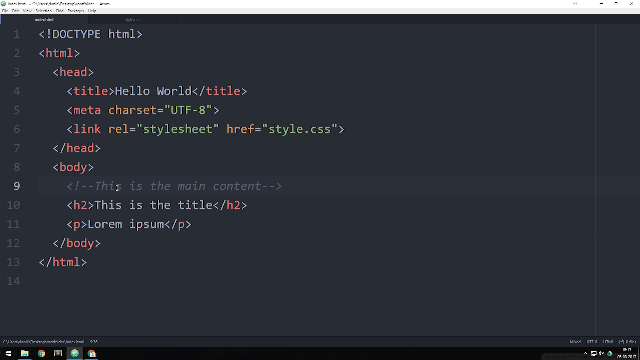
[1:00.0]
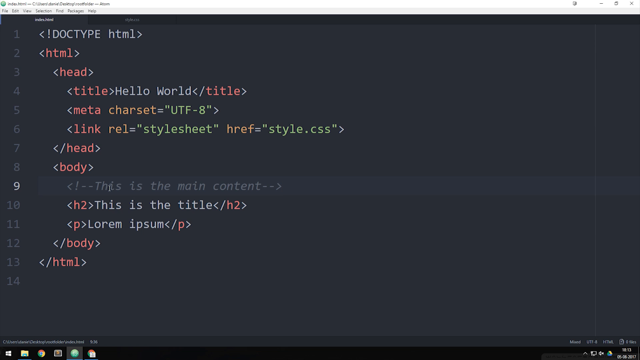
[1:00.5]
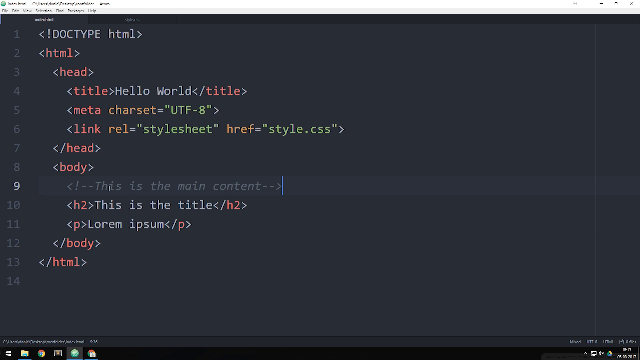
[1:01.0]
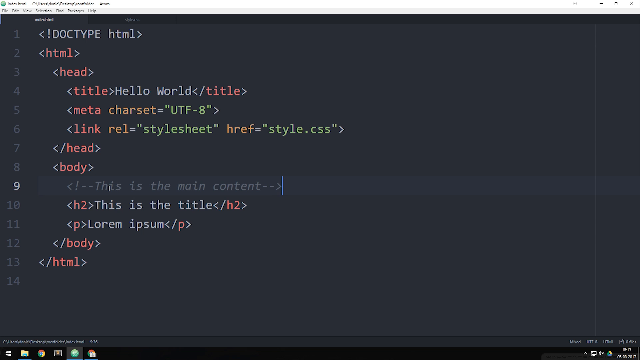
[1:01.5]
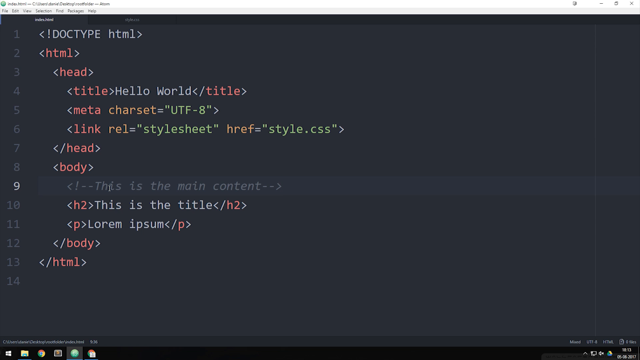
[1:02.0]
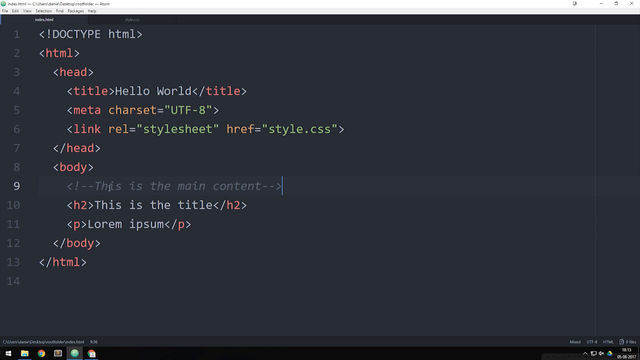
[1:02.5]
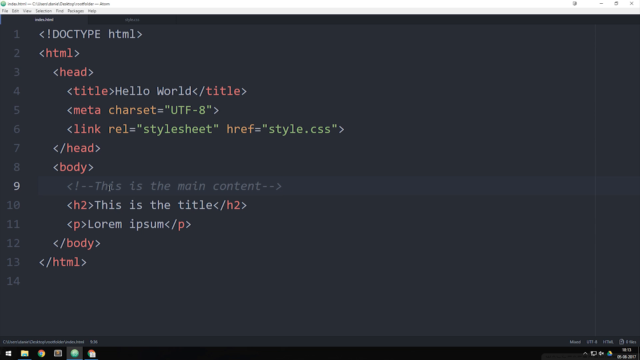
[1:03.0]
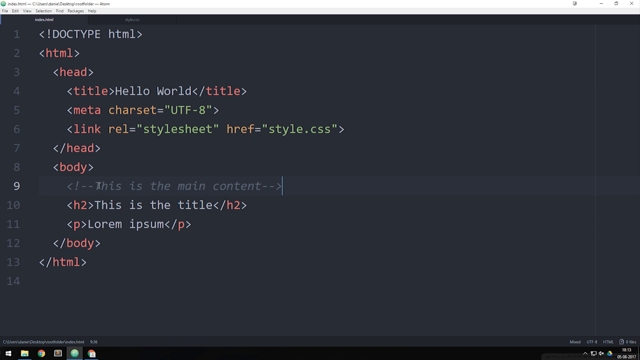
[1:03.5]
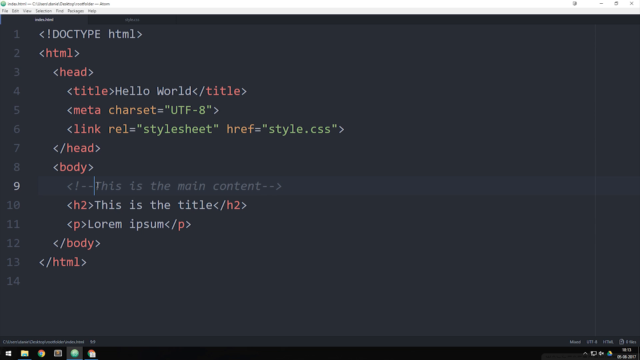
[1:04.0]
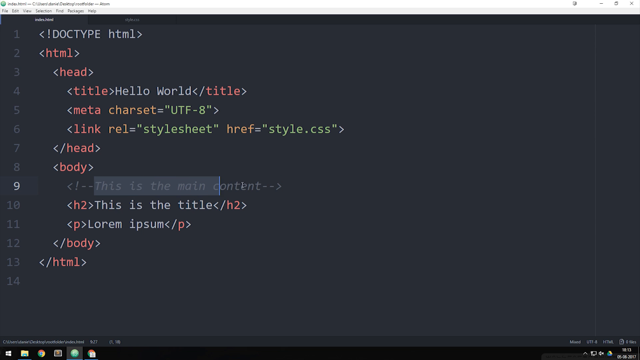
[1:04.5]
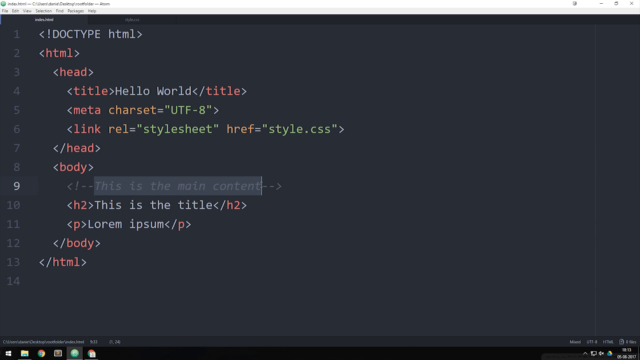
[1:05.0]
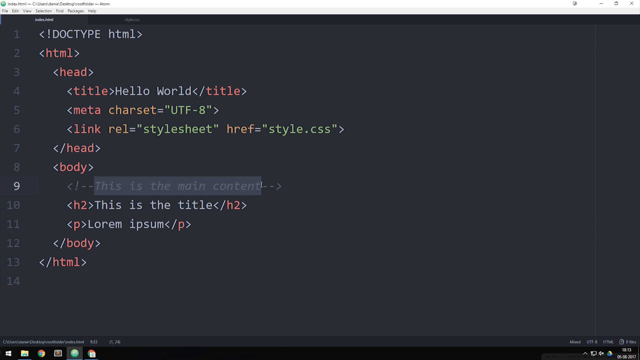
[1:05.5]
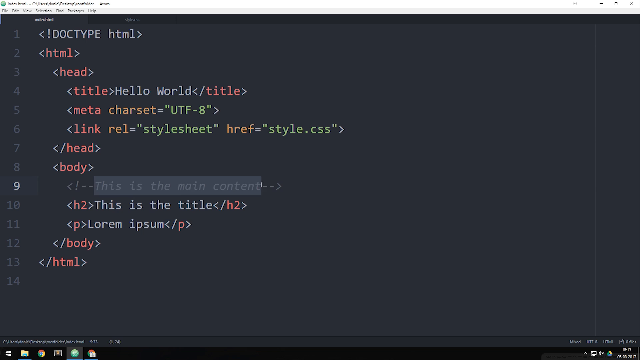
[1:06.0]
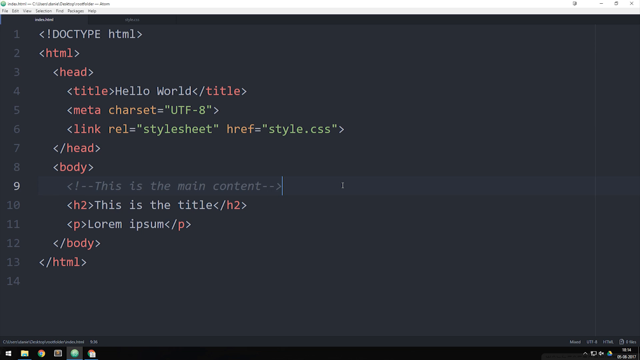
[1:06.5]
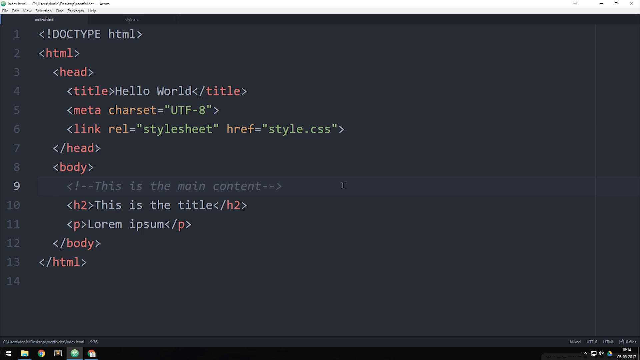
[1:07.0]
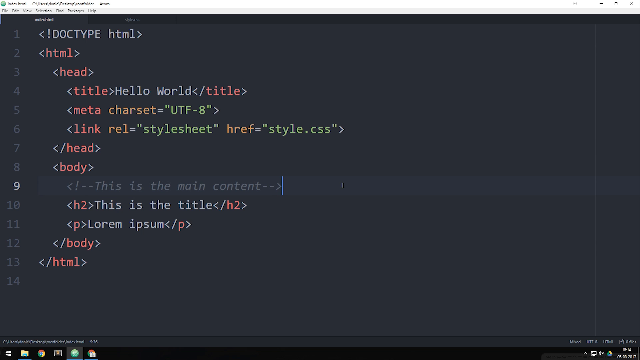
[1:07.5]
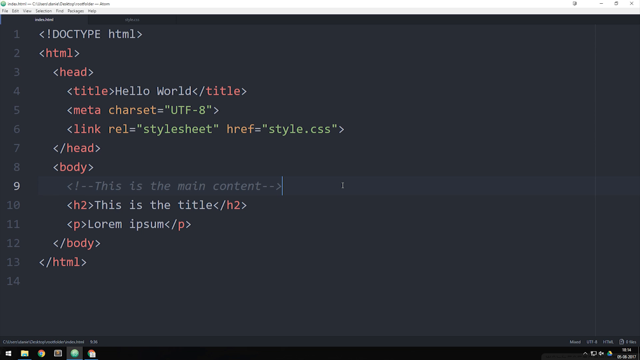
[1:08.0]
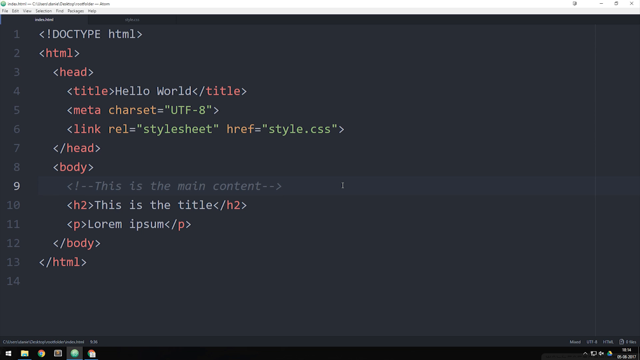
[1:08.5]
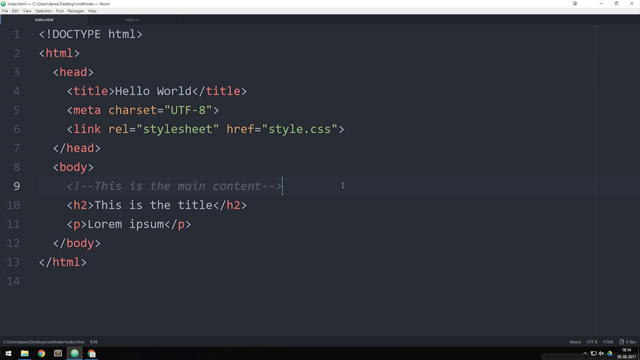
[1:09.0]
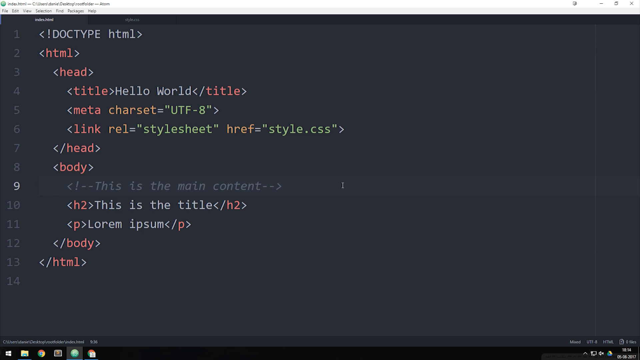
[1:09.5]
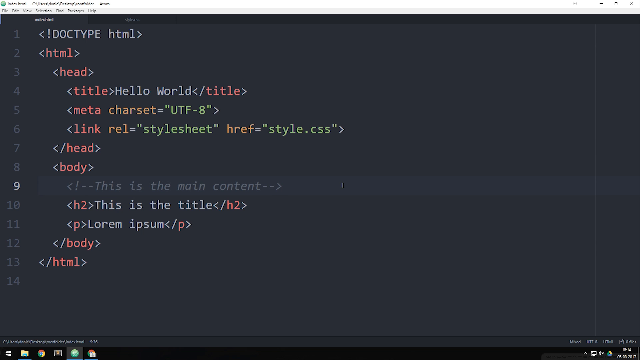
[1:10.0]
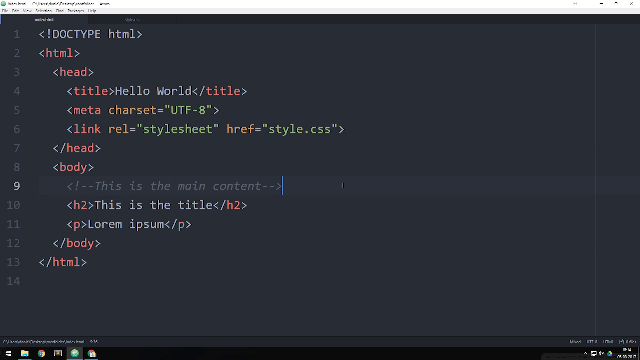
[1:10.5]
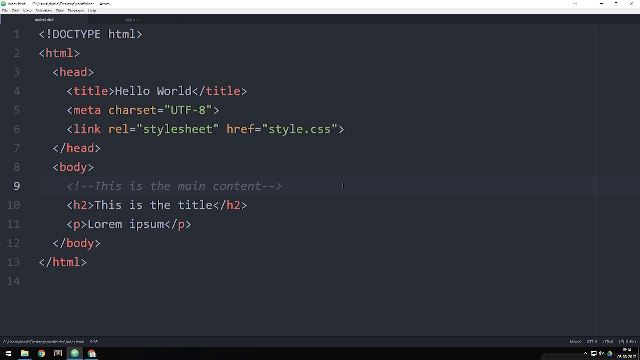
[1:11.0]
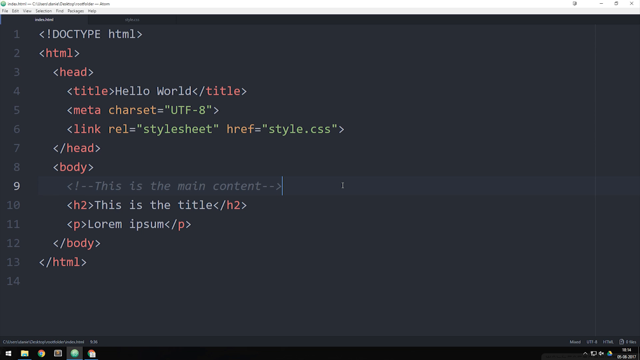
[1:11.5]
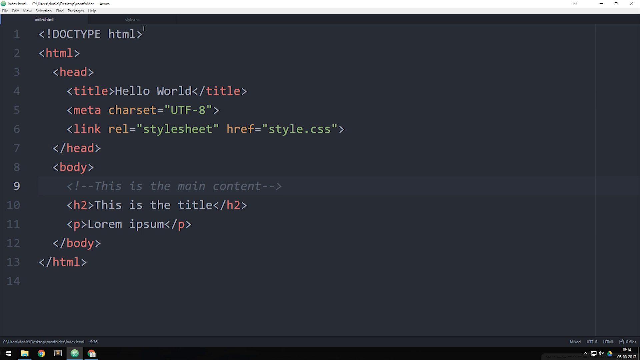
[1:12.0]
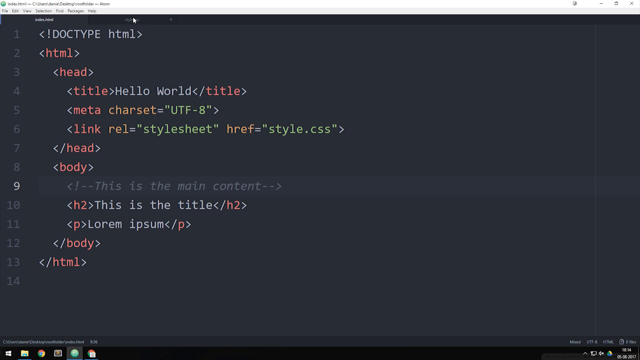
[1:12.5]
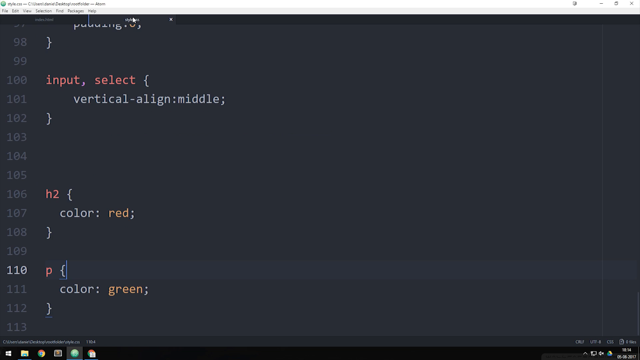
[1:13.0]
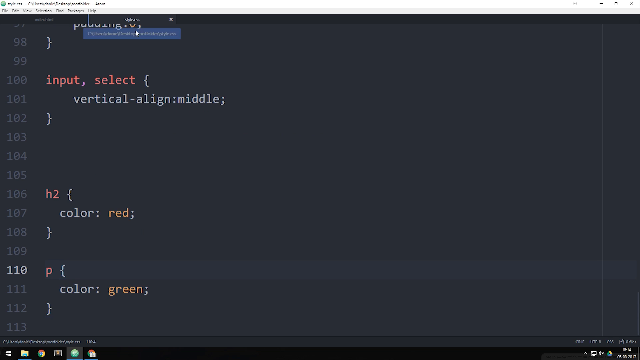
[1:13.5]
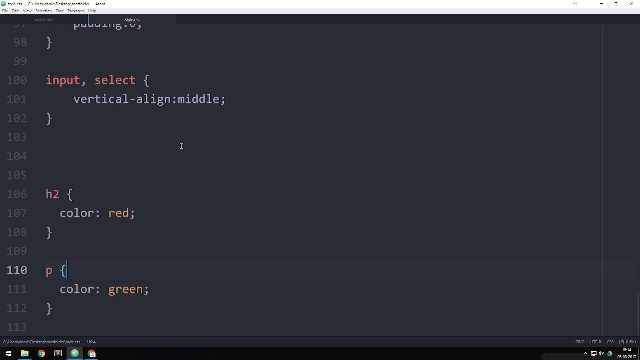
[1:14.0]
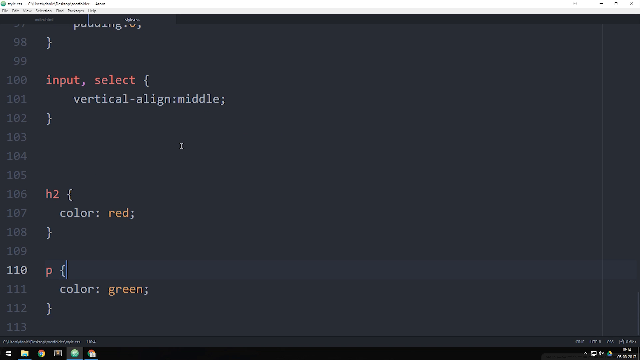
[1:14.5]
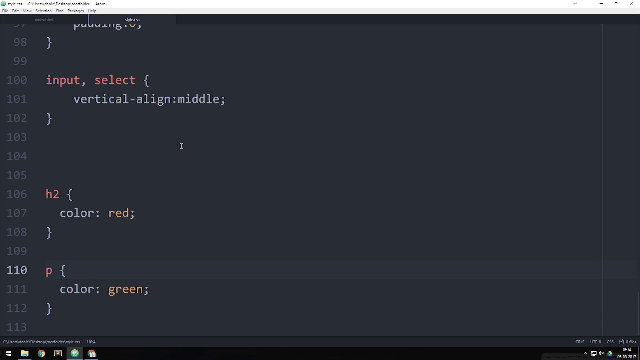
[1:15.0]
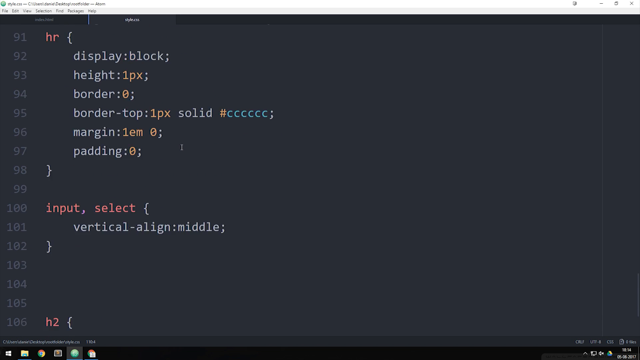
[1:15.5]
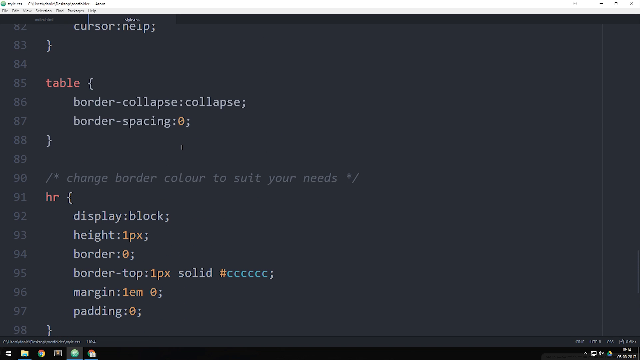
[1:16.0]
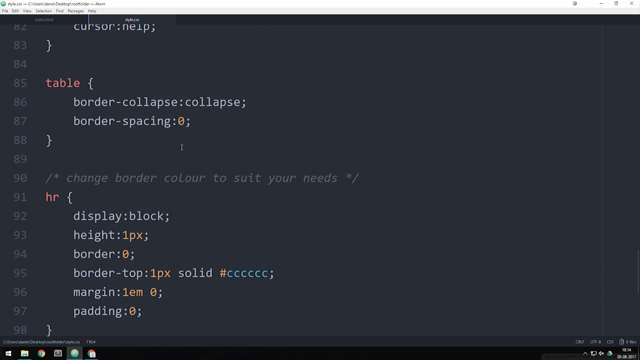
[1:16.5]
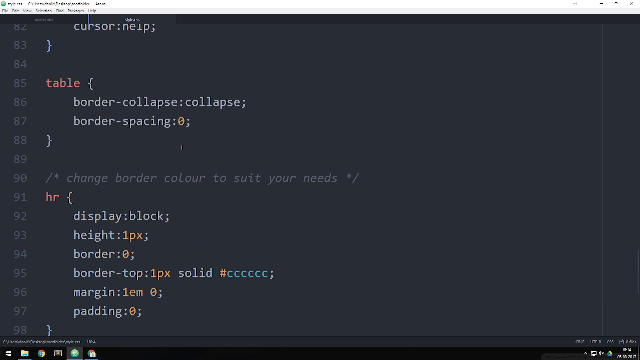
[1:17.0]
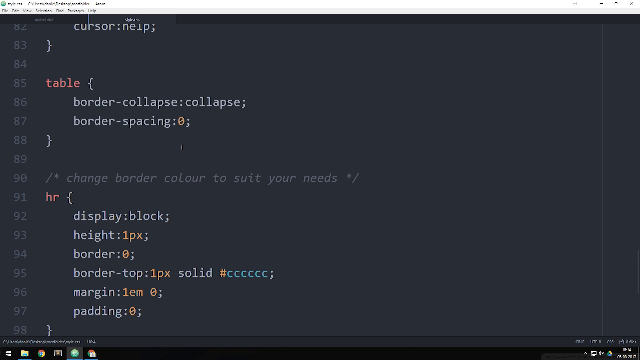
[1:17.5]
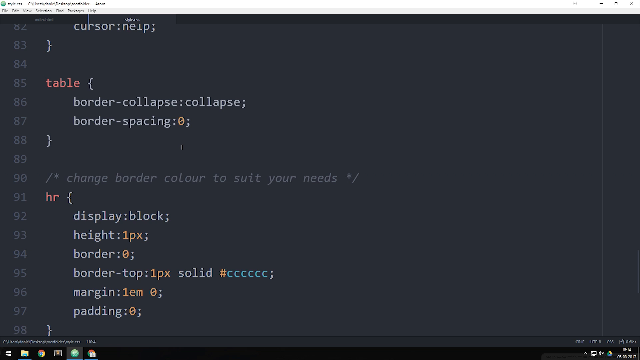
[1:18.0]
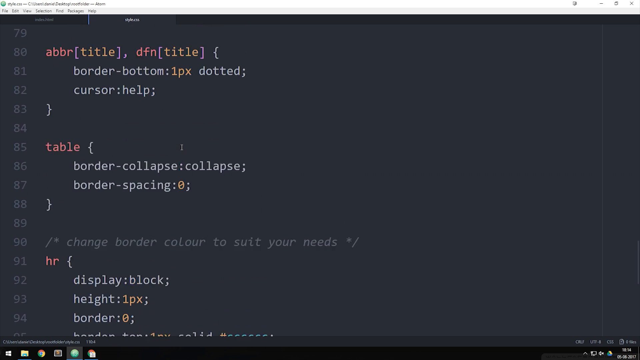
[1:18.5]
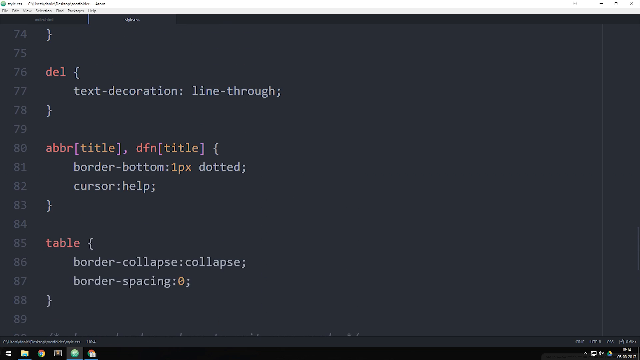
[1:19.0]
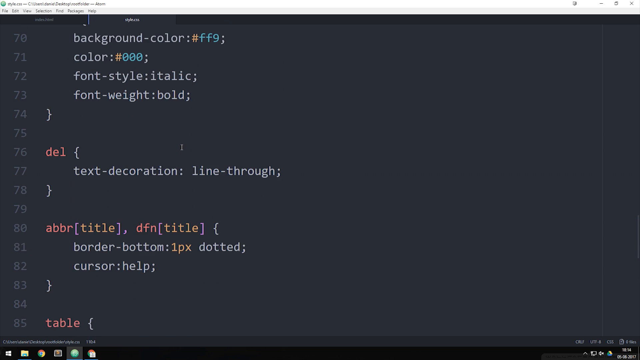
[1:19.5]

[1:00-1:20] HTML code for a website fills a screen: at the very top it says "doc type", then "HTML", then a header with a title that says "Hello World", followed by the closing of the header and a link where rel is "stylesheet" and the hreference is "style.css". In the body section someone has typed an arrow pointing left with an exclamation mark, two dashes, "this is the main content", two dashes and an arrow pointing right. Underneath is an h2 that says "this is the title", then "lorem ipsum", then the closing of the body and the closing of the HTML. The cursor blinks on line 9, where it says "this is the main content". The user highlights "this is the main content", and the cursor returns to where it was. A very small mouse cursor to the right on that same line moves up and clicks something at the top that is too hard to read, apparently an open tab, which opens a different code containing "input", "table" and many other codes. The user keeps scrolling up, looking through the different codes.